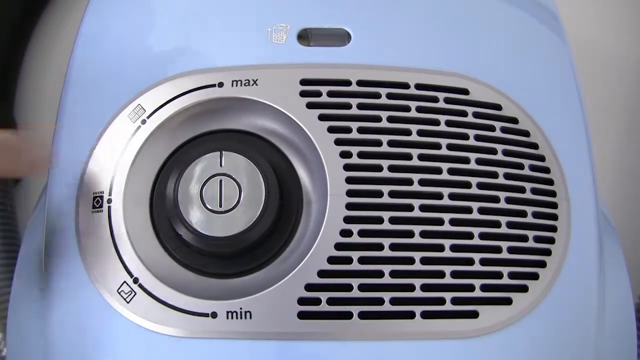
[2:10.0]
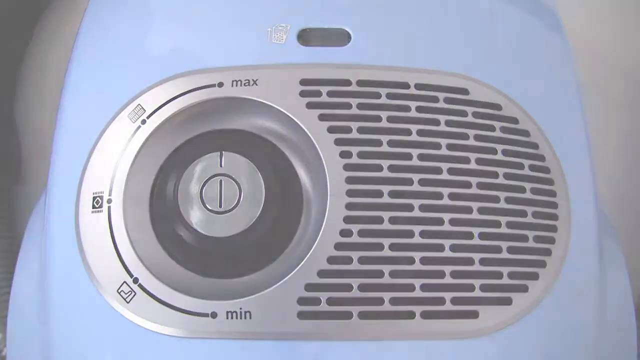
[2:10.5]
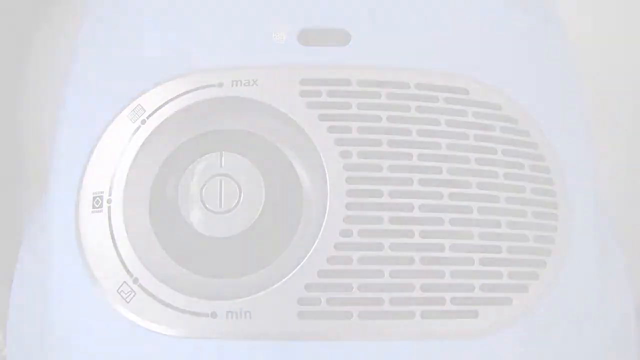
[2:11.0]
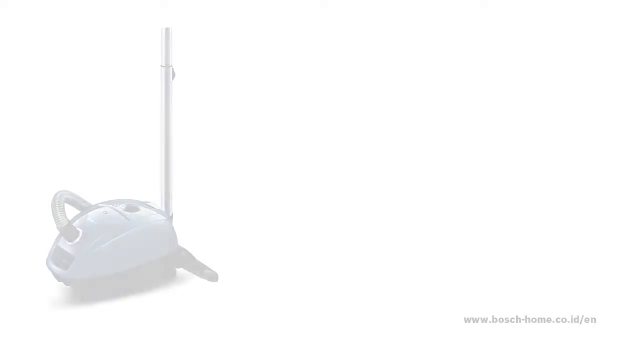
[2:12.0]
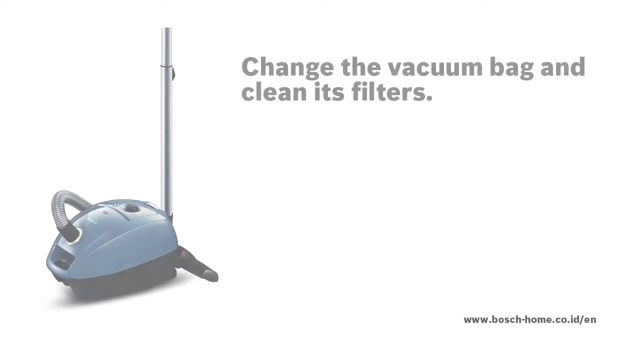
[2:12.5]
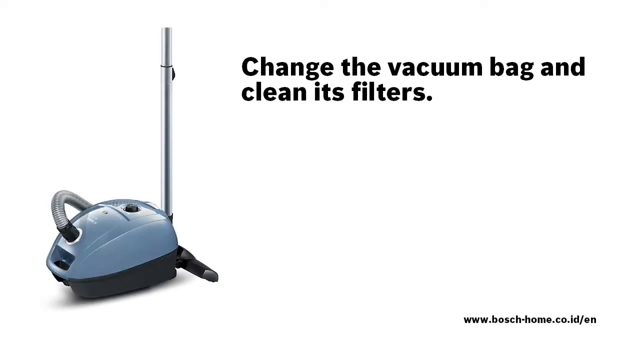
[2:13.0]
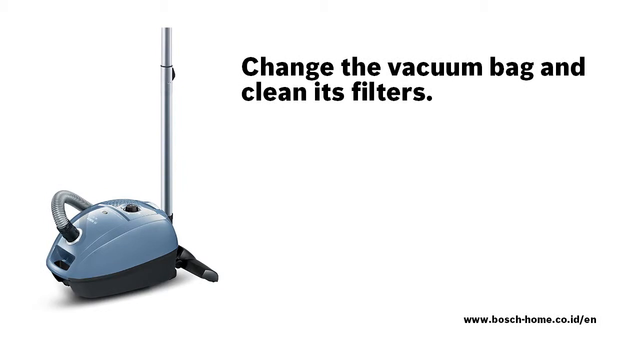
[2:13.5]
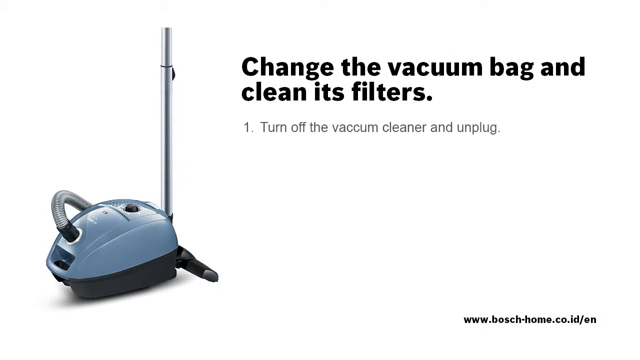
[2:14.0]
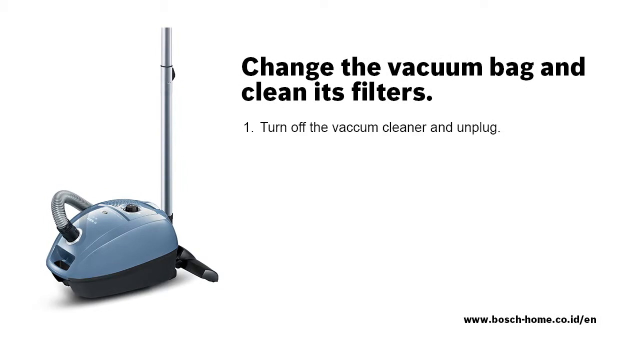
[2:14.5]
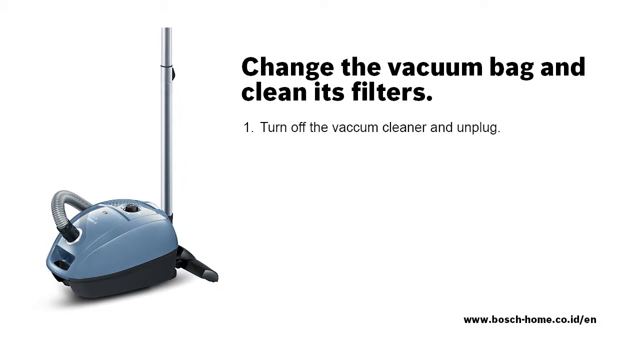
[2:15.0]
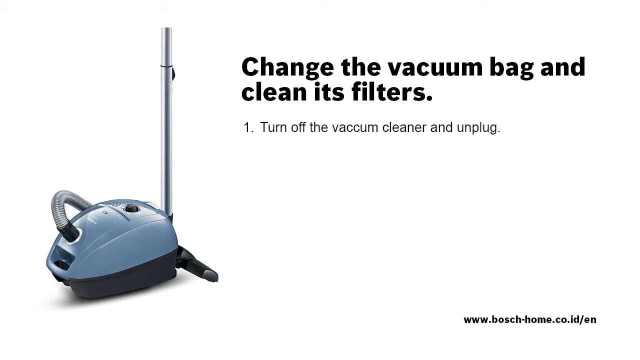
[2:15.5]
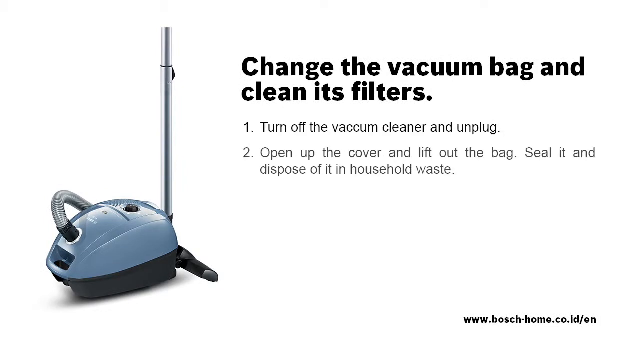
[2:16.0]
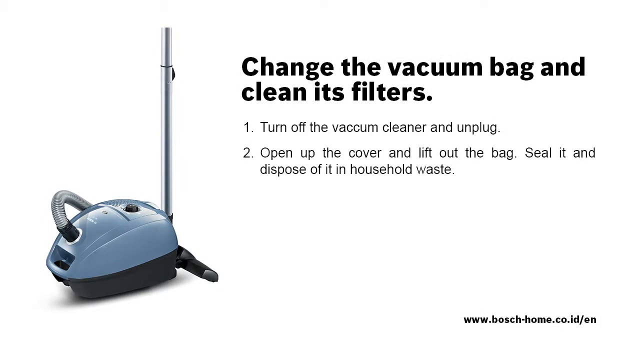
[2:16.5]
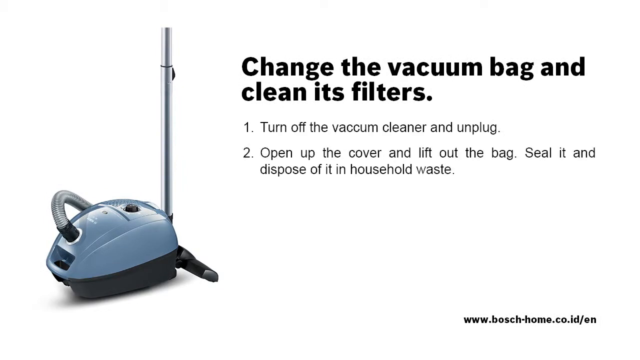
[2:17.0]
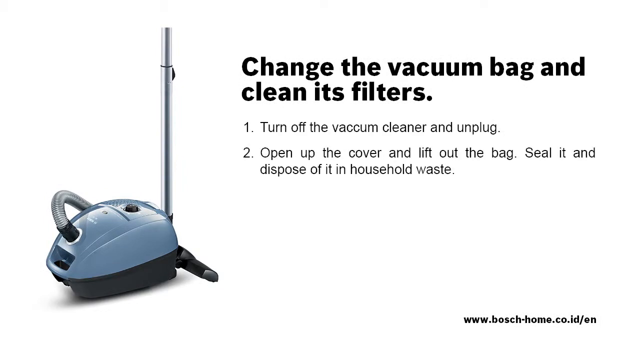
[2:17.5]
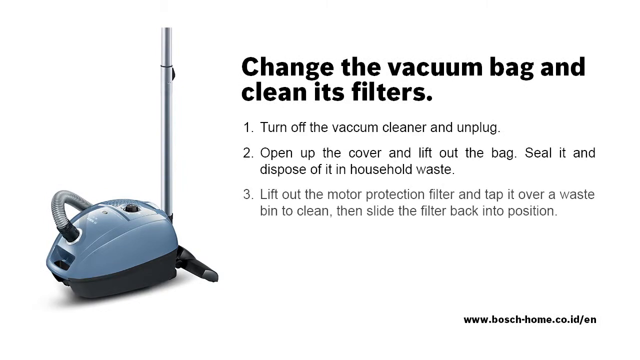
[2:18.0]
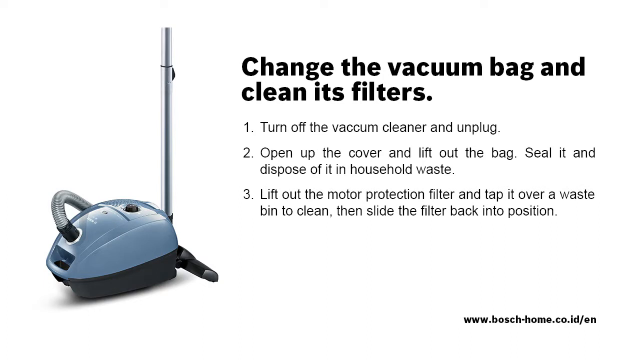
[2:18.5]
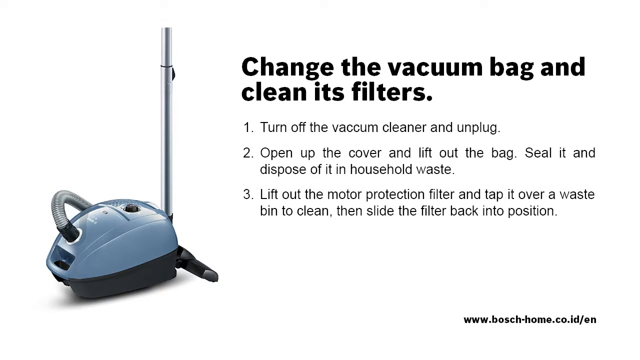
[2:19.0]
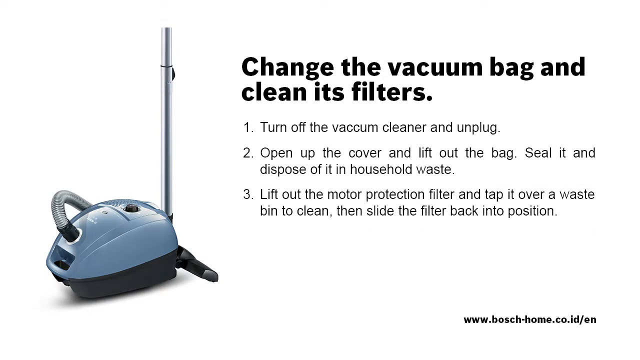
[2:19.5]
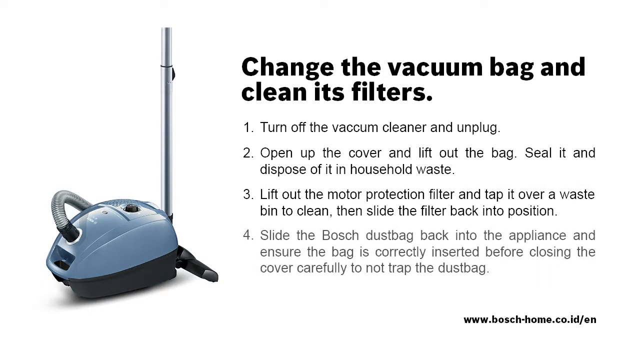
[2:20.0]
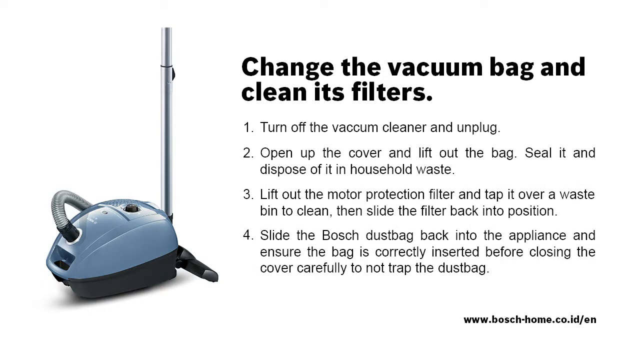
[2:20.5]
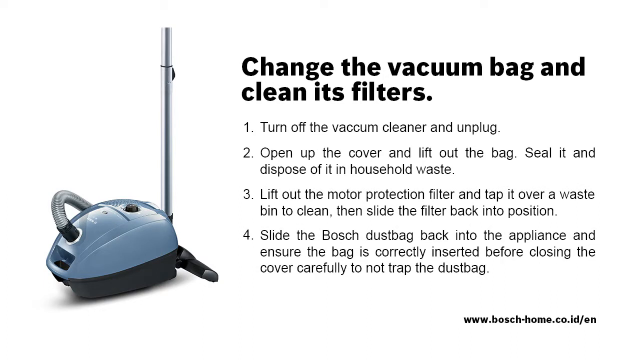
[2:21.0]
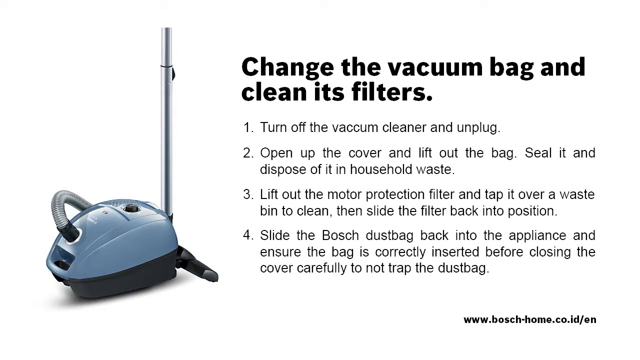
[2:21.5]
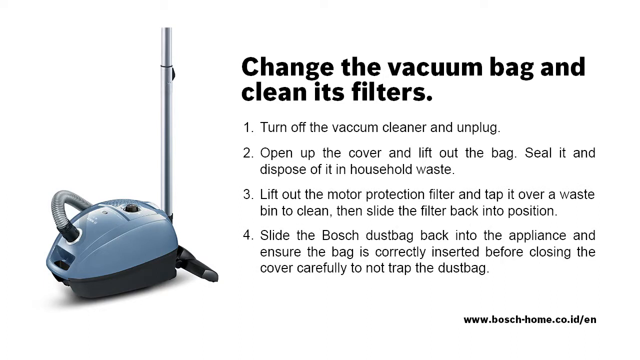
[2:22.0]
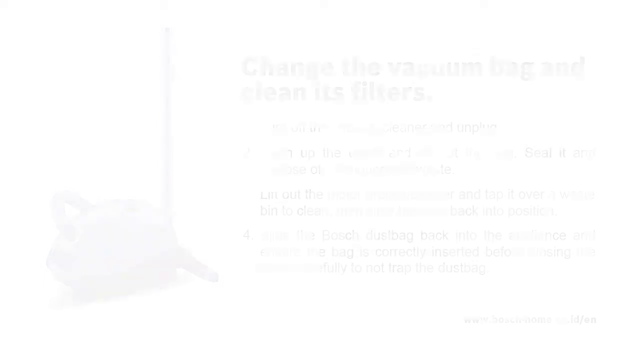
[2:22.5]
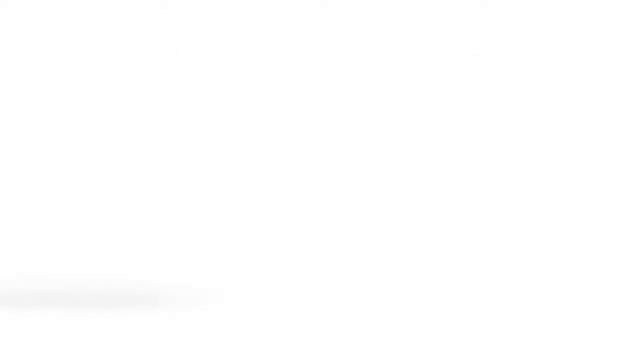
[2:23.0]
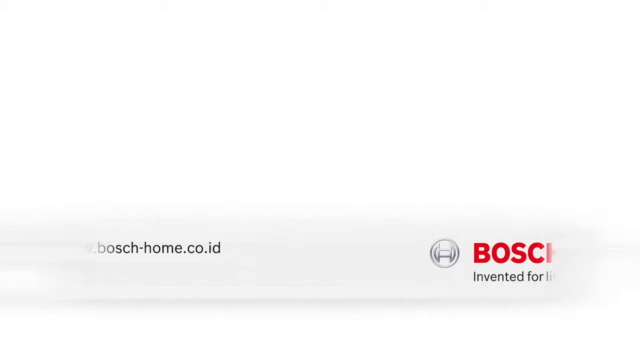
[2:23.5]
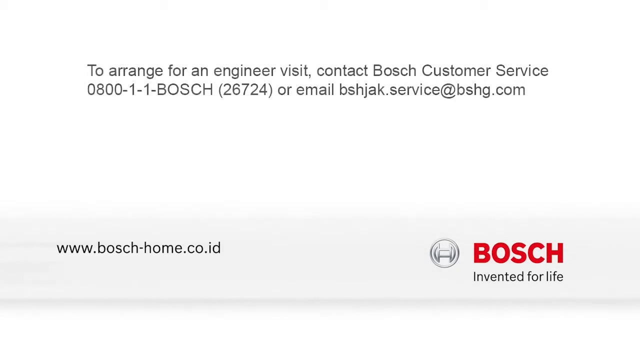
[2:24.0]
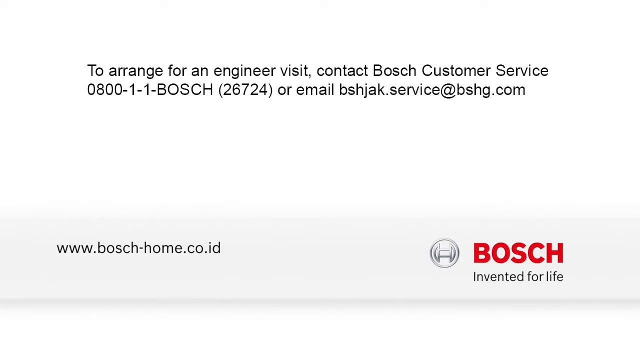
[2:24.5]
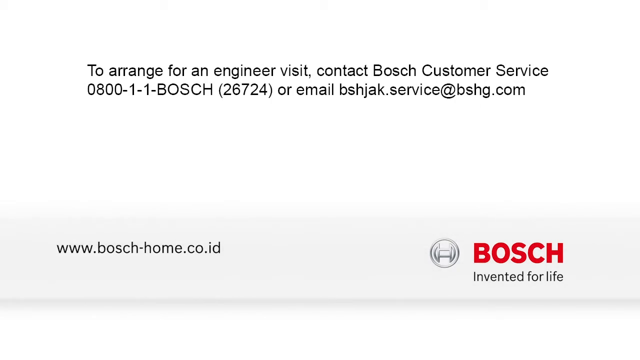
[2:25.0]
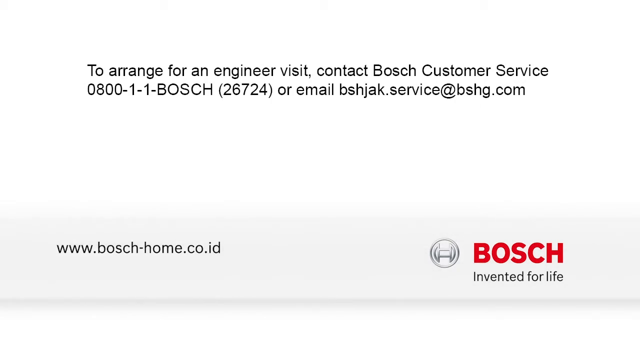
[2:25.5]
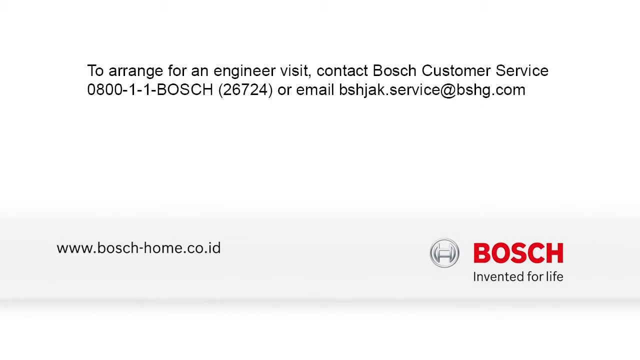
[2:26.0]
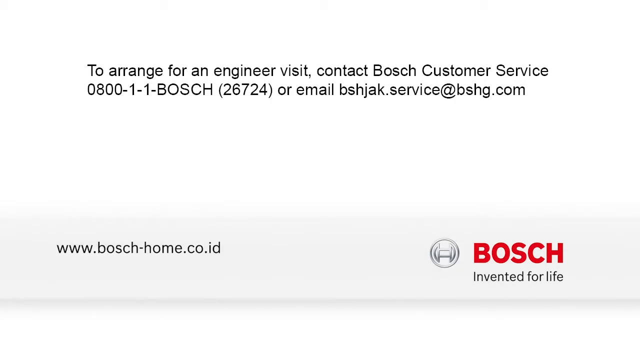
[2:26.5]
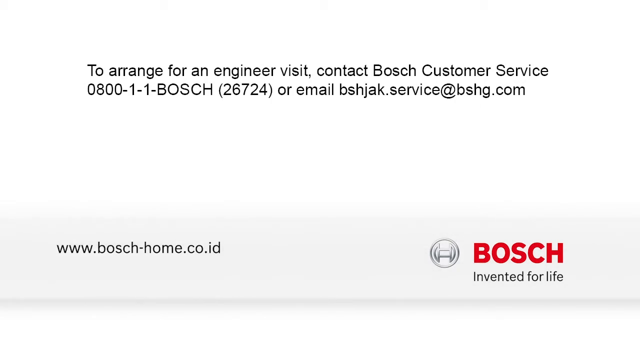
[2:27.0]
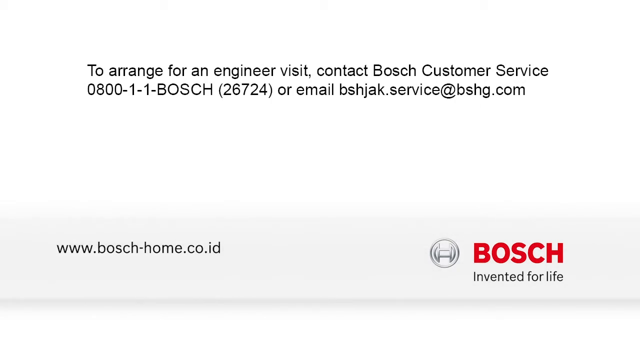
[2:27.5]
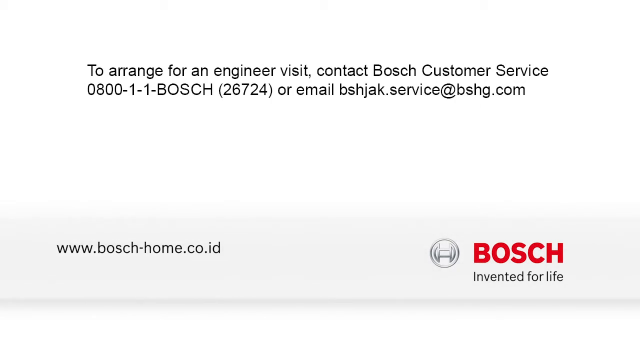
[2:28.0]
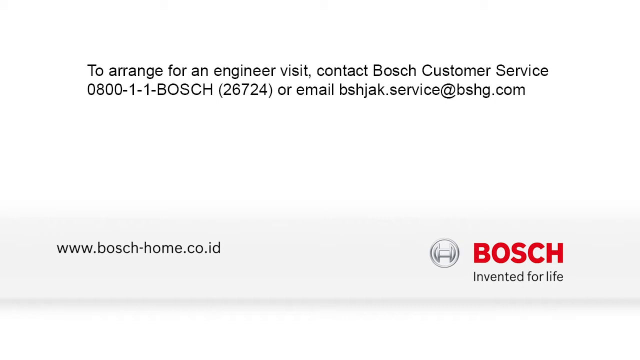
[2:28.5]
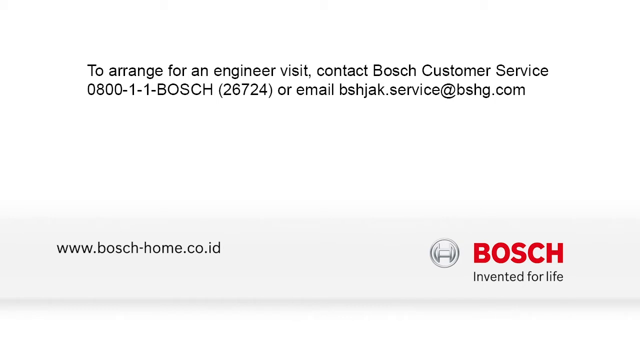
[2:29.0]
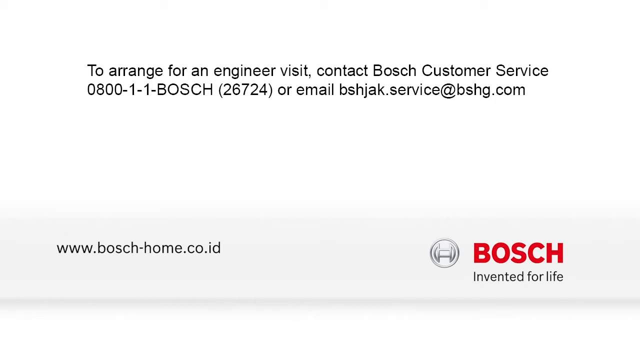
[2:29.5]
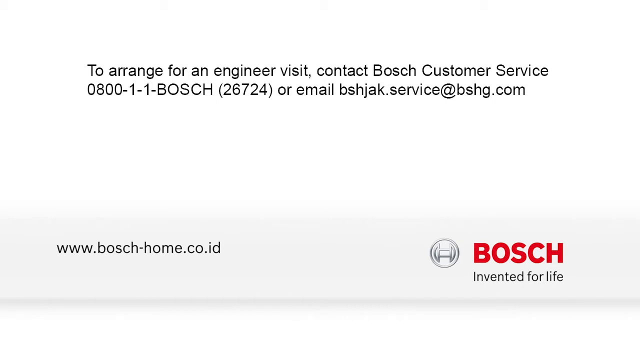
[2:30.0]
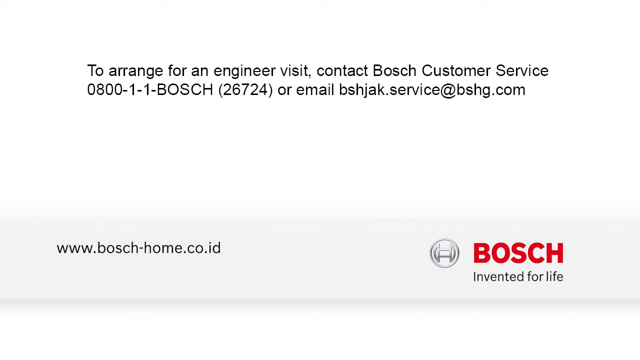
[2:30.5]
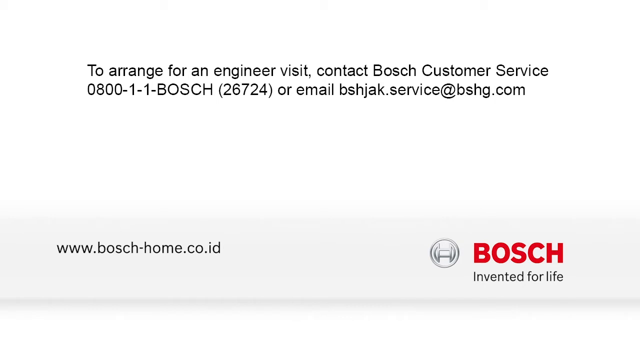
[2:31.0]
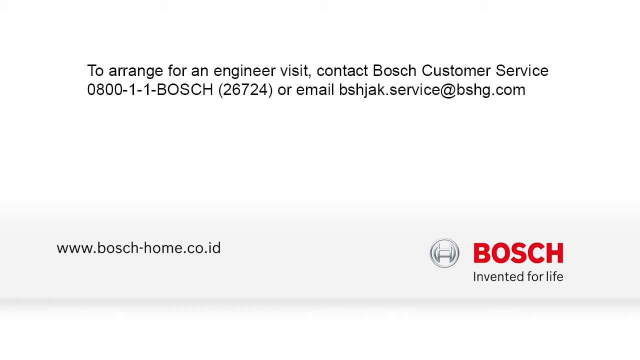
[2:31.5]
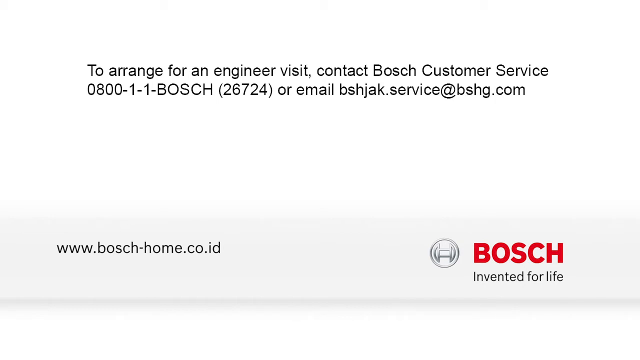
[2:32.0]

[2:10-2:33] The blue vacuum is shown with the knob that has a start button. It fades to the next scene, showing the vacuum with the words "change the vacuum bag and clean its filters" in a large black font to its right. Below that are numbered steps: "1. Turn off the vacuum cleaner and unplug. 2. Open up the cover and lift out the bag, seal it, and dispose of it in household waste." Step 3 begins "Lift out the" and continues "filter and tap it over a waste bin to clean, then slide the filter back into position." Step 4 reads "Slide the dust bag back into the appliance and ensure the bag is correctly inserted before closing the cover carefully to not trap the dust bag." The website "www.bosch-home.co.id" appears in the bottom right corner. The scene fades out, followed by the words "To arrange for an engineer visit, contact BOSCH Customer Service 0800-1-1-BOSCH 26724 or email bshjak.service@bshg.com".